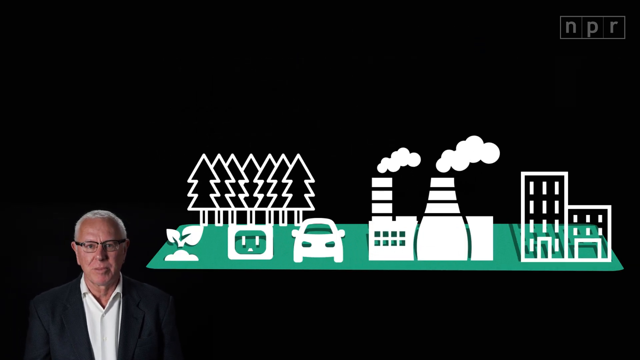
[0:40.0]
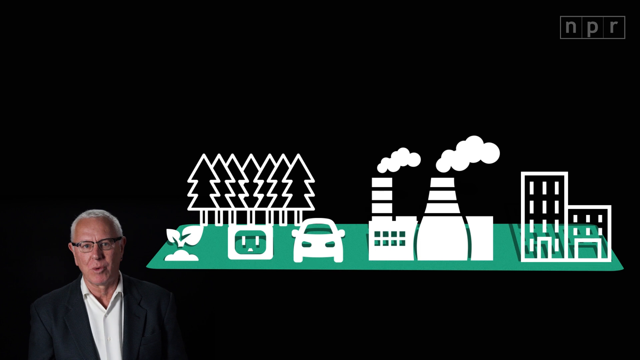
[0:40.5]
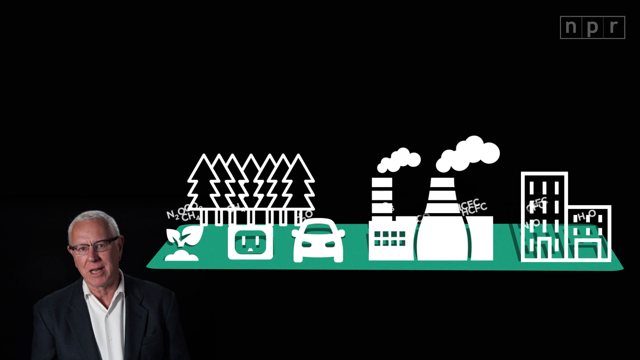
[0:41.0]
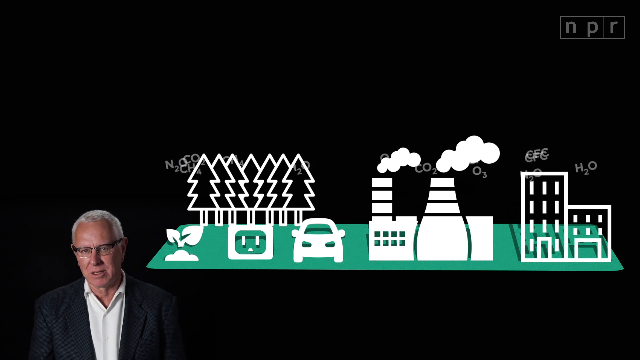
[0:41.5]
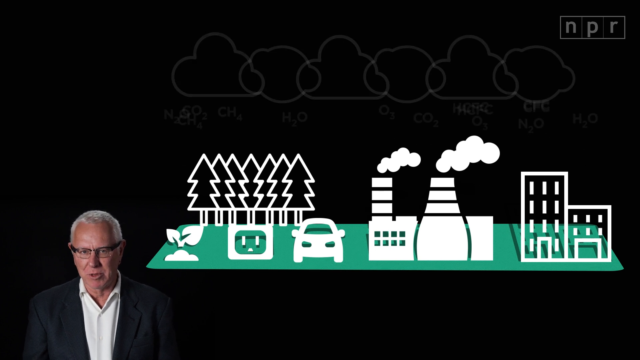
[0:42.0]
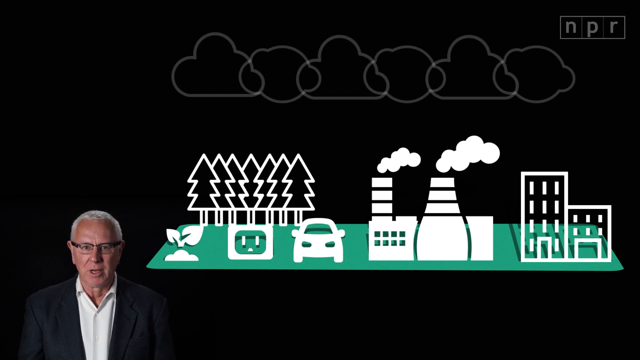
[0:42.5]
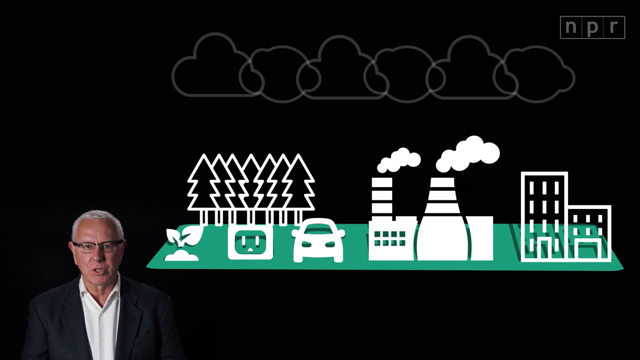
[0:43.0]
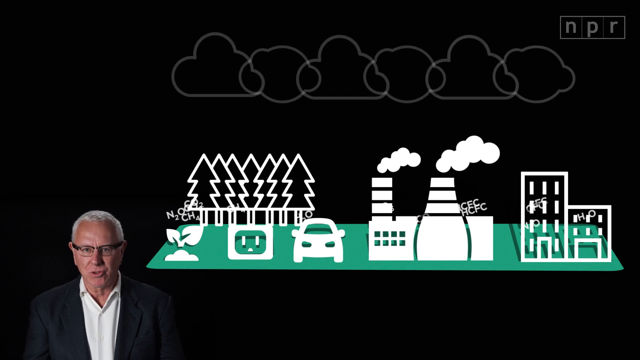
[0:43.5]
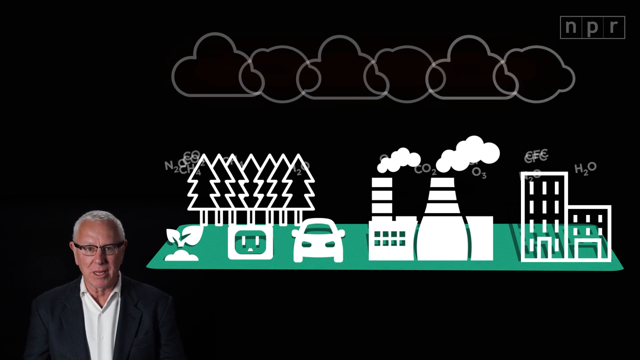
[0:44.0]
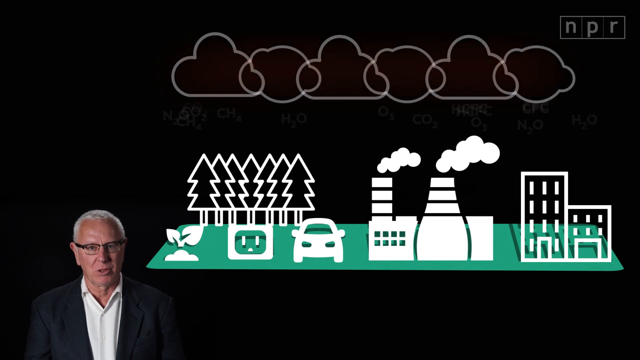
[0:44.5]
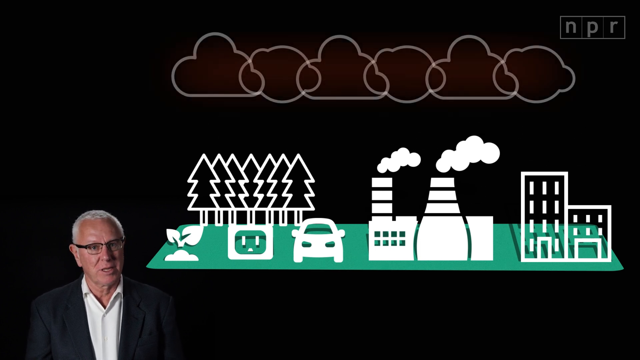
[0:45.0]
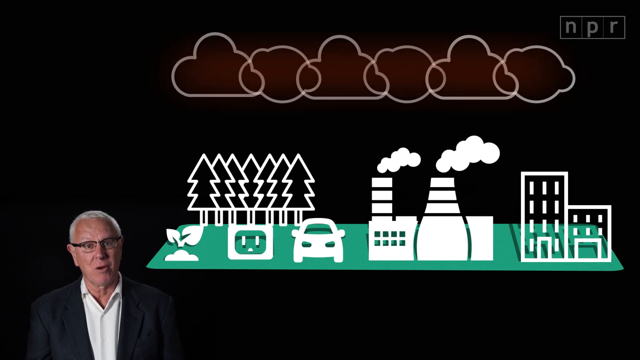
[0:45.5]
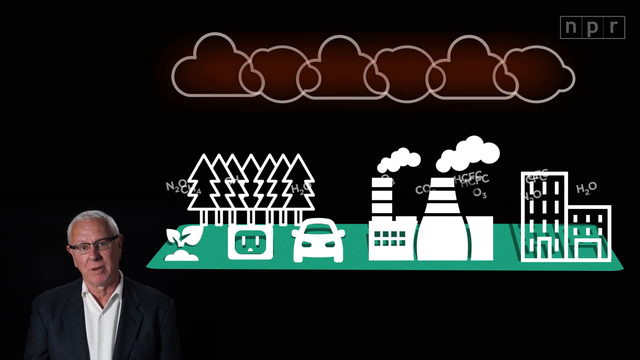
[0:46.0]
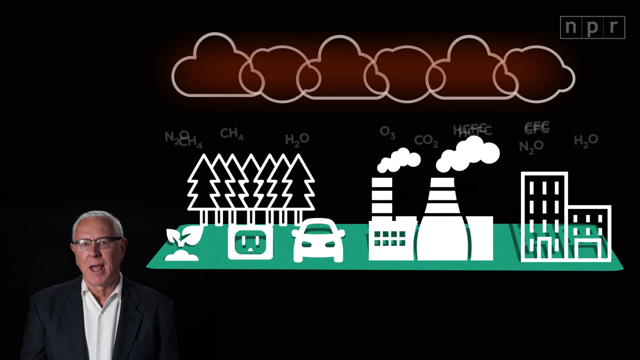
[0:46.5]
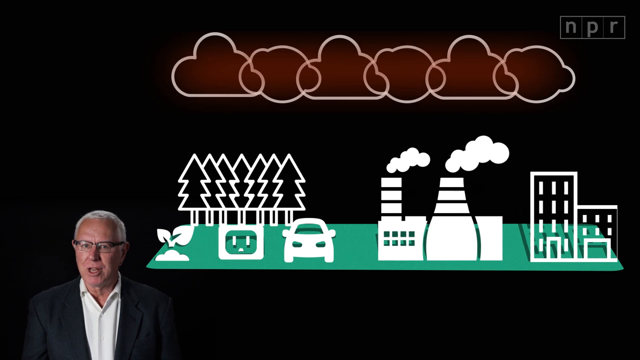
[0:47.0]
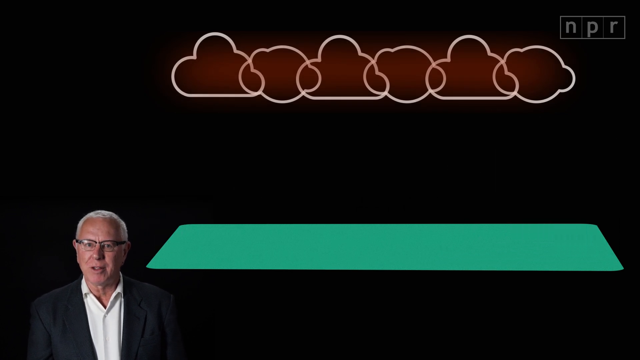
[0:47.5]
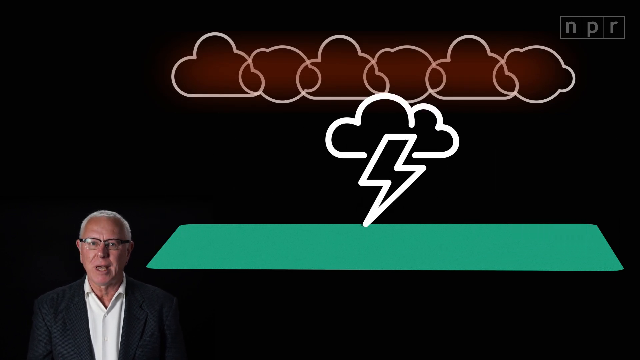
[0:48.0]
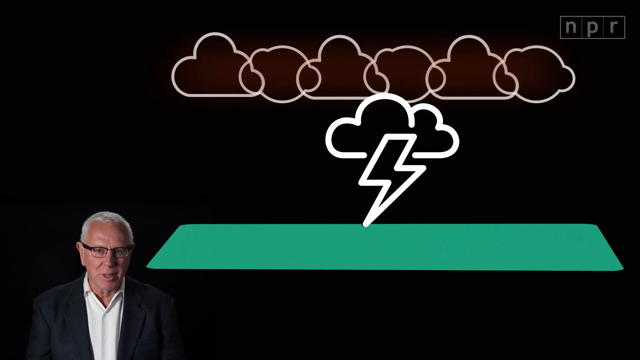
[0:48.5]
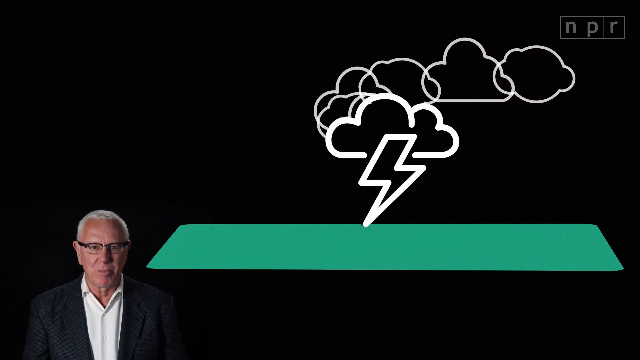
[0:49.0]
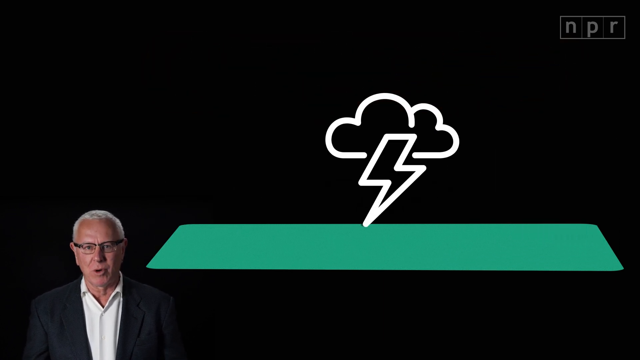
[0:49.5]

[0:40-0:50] The man seen at the beginning is in the lower left corner. A green rectangle shows trees, plants growing, electronics, cars, factories and buildings. Quickly, clouds appear up in the sky and lightning comes down, and the other pictures are taken away. Right at the end there is something that is sitting on the ground, and beneath it text reads "Snowless Chicago, February 2017." There are people around the picture as well.